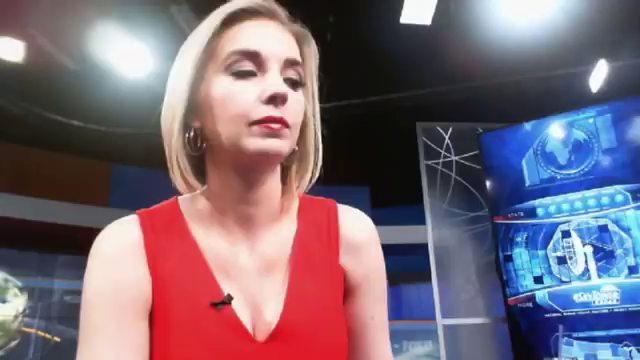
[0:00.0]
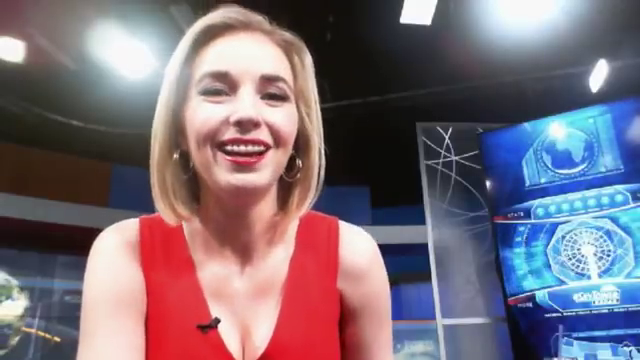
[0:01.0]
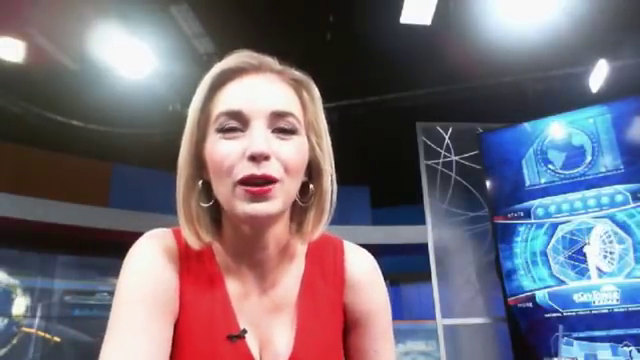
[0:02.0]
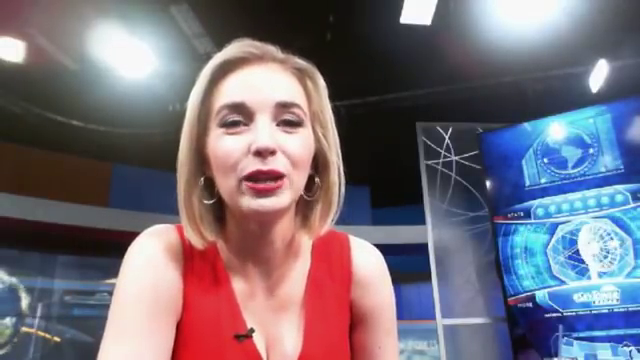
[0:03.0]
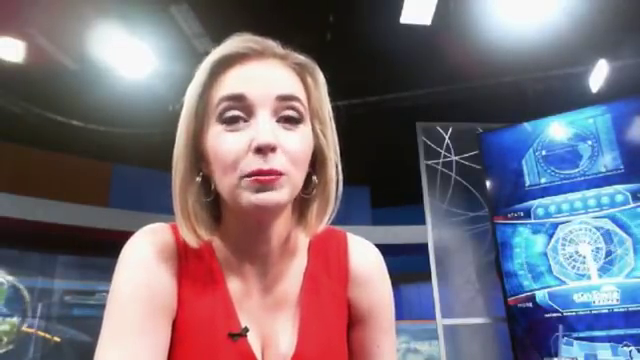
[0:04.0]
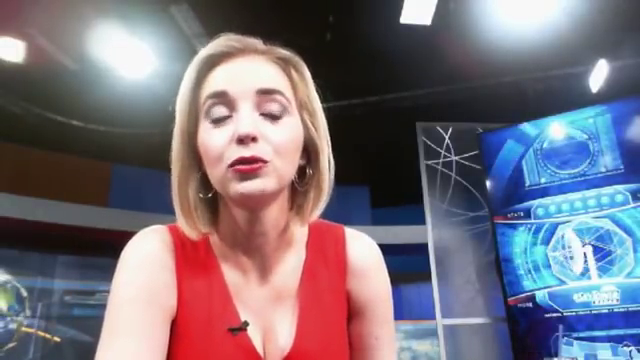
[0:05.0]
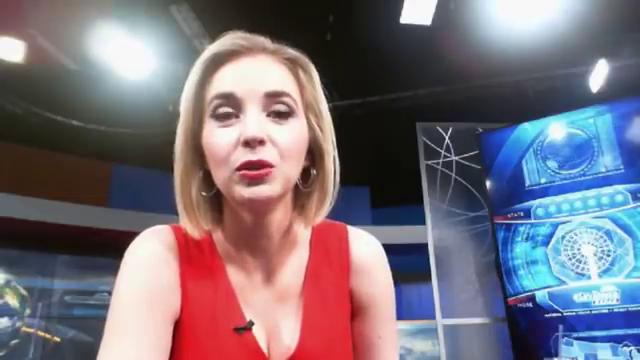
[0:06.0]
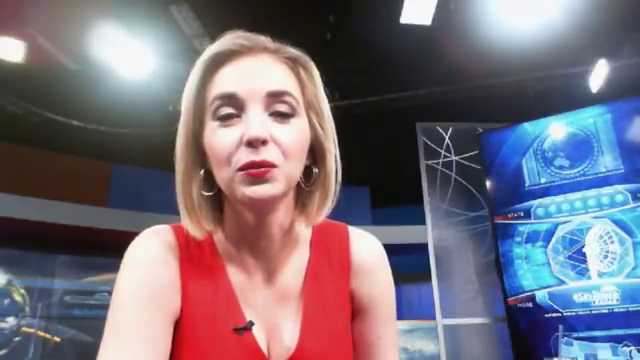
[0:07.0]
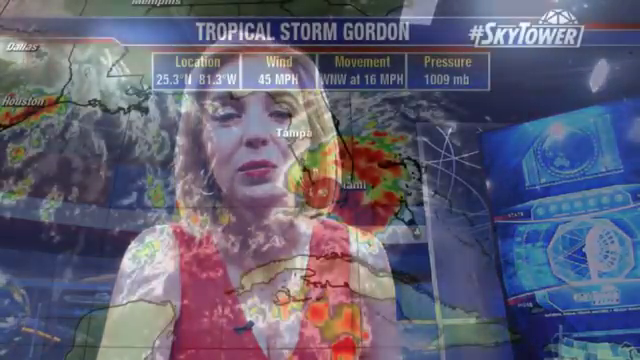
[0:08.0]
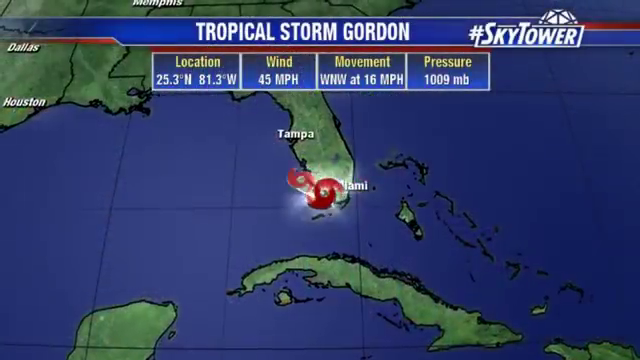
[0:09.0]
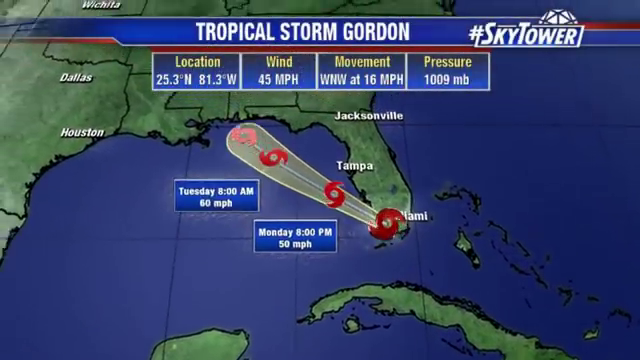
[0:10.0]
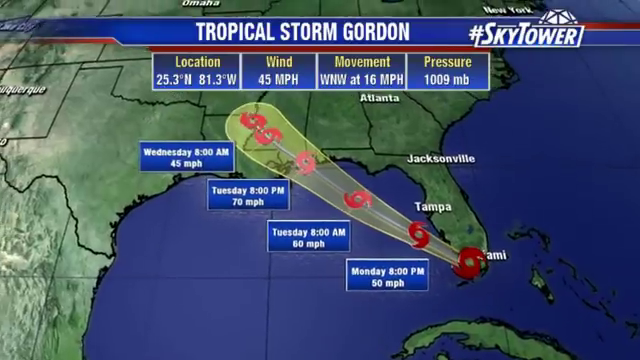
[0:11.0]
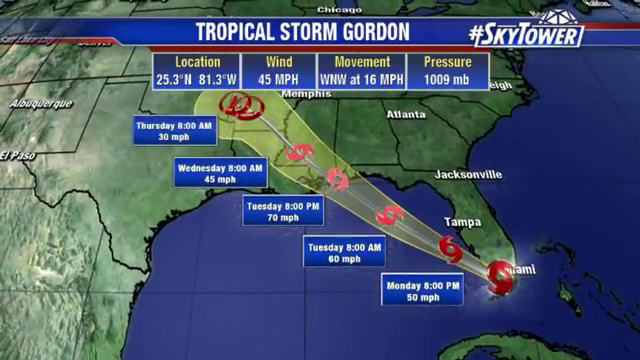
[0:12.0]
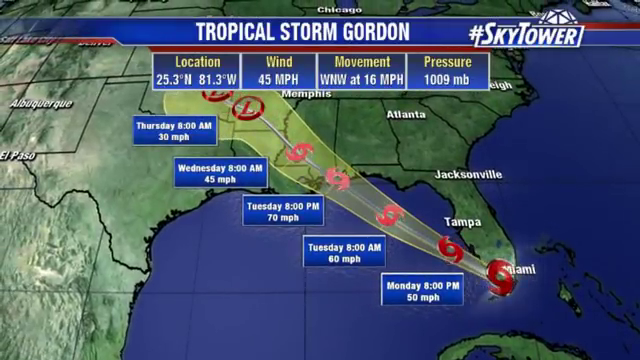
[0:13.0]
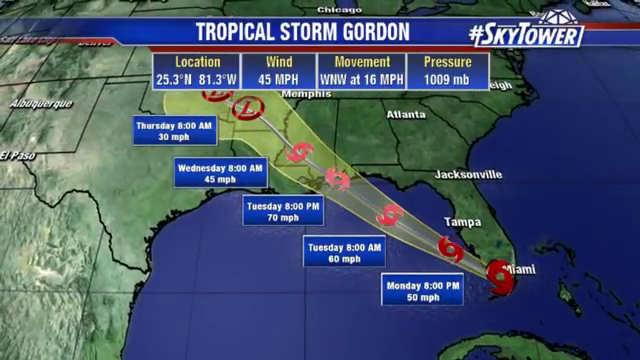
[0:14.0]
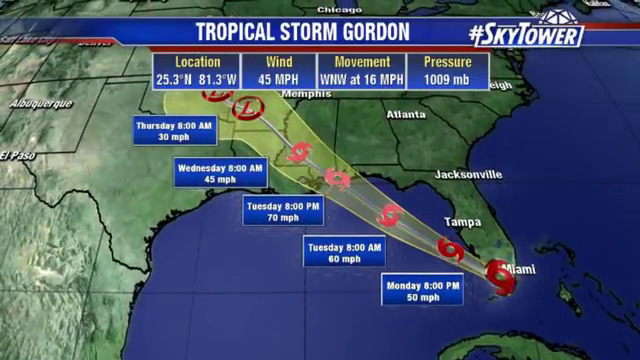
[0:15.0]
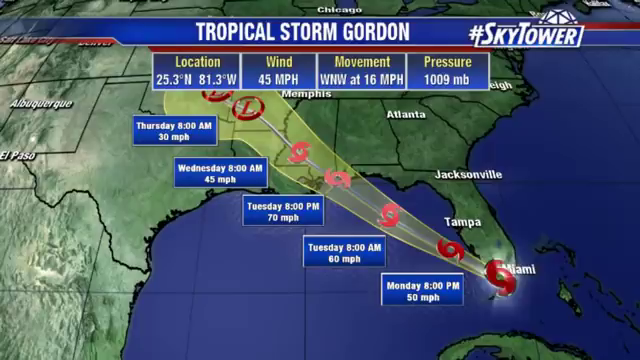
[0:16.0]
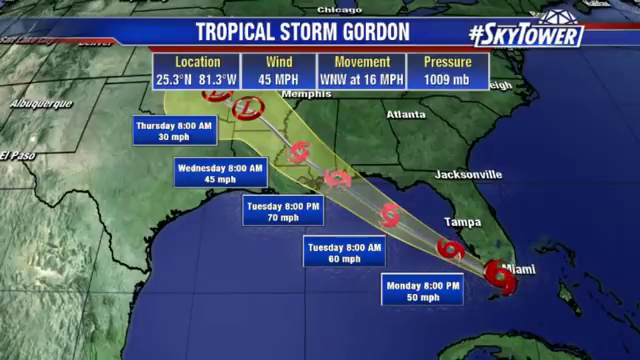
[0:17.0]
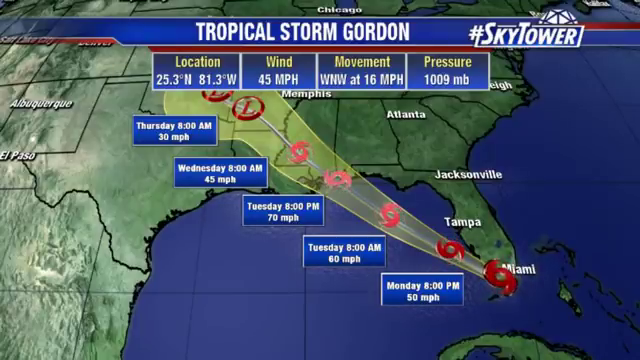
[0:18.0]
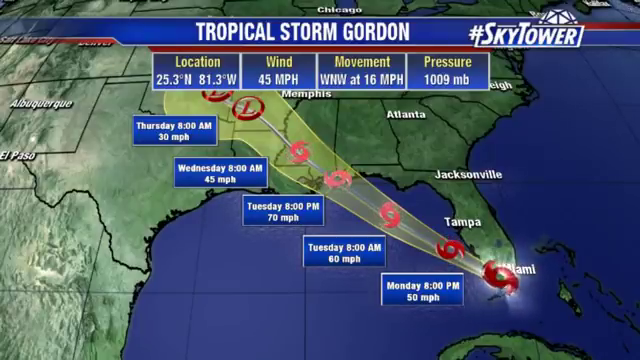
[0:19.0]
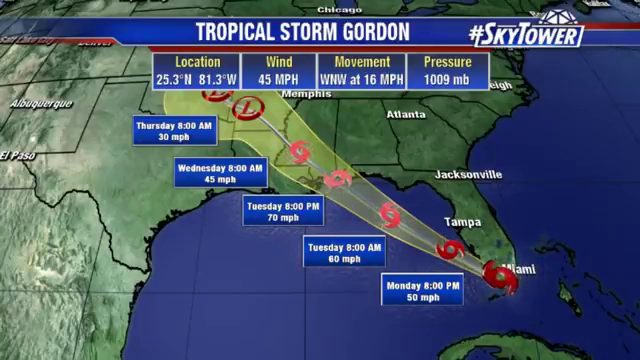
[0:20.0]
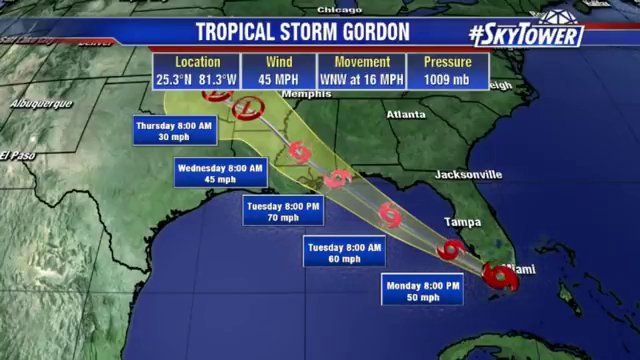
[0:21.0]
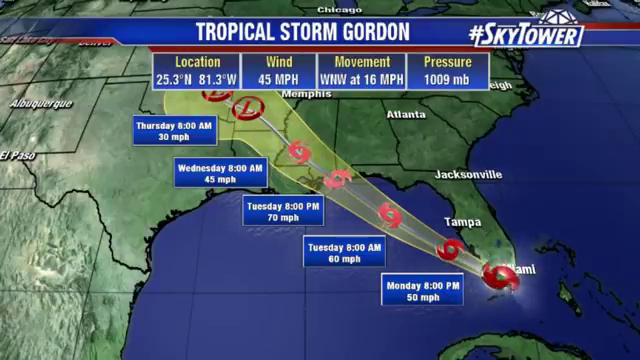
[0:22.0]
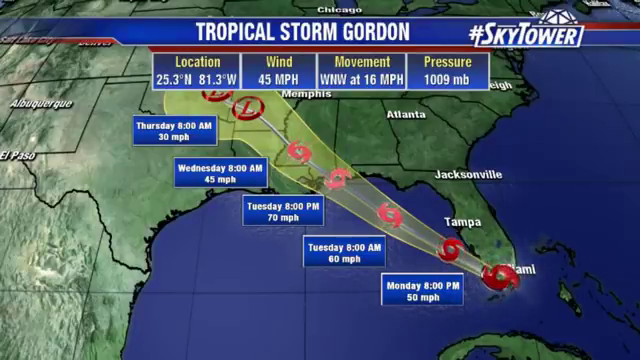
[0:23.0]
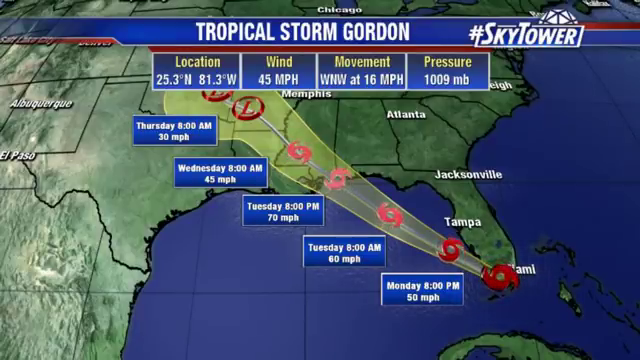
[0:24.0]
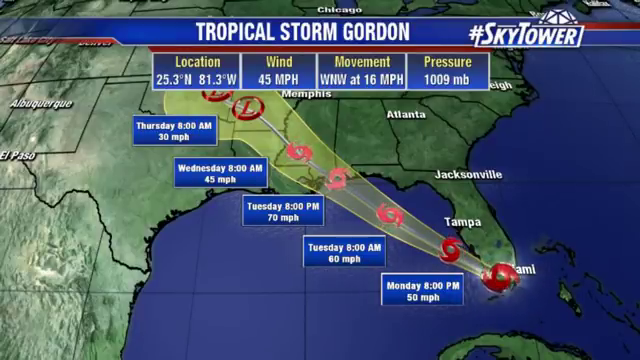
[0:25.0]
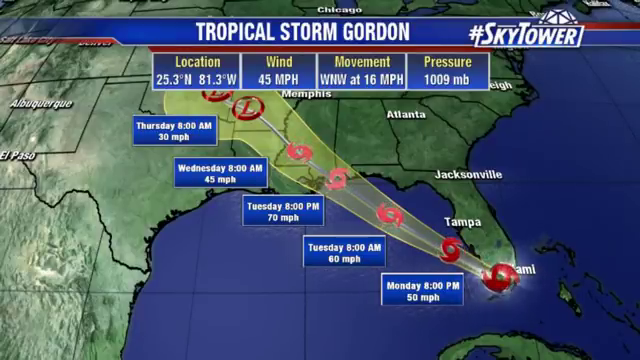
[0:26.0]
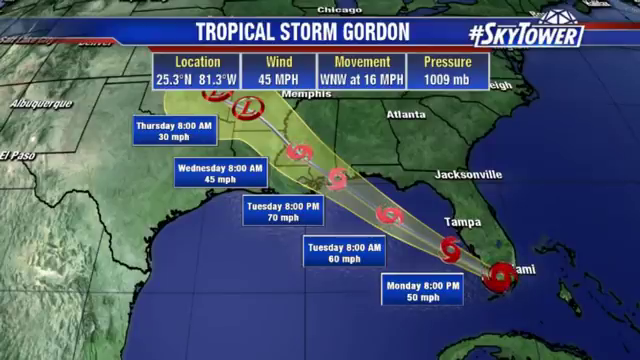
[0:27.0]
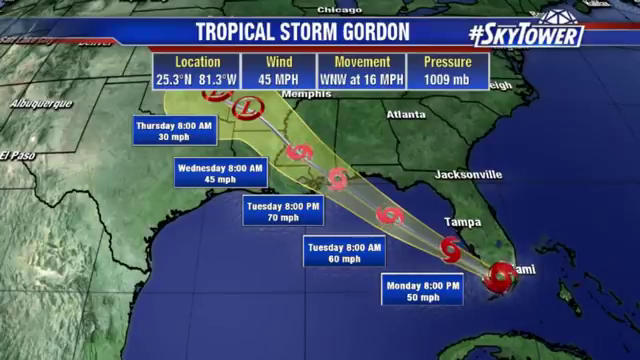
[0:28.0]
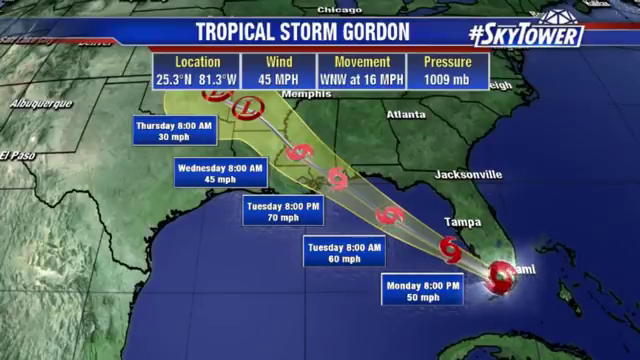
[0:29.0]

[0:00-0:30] The video opens inside a newsroom, shot from an unusual, somewhat low camera angle. A female newscaster bends over and speaks down into the camera, smiling a lot, with a microphone attached to her dress. After she finishes smiling, the shot fades out to a radar image focused on the state of Florida and Tropical Storm Gordon. The map shows Gordon's path, which appears to pass over the edge of South Florida, head into the Gulf near Mississippi, and then go into the continental U.S. Little hurricane images spin counterclockwise along the path. Other graphics also appear on the screen, including little boxes giving the times, such as the time of day and day of the week, when the storm is expected to hit certain parts of the region.